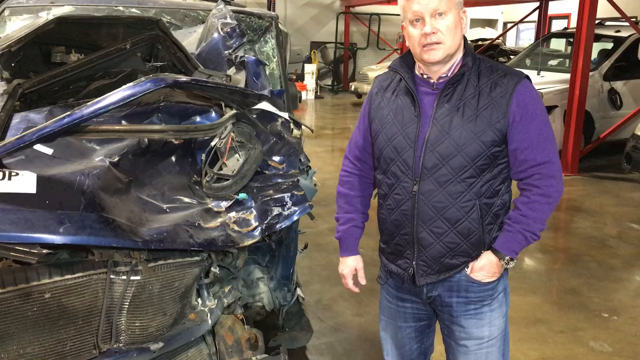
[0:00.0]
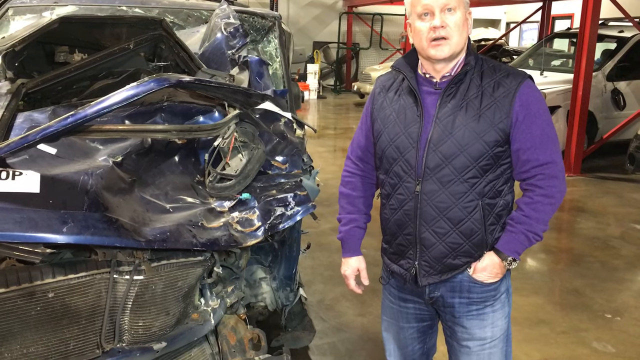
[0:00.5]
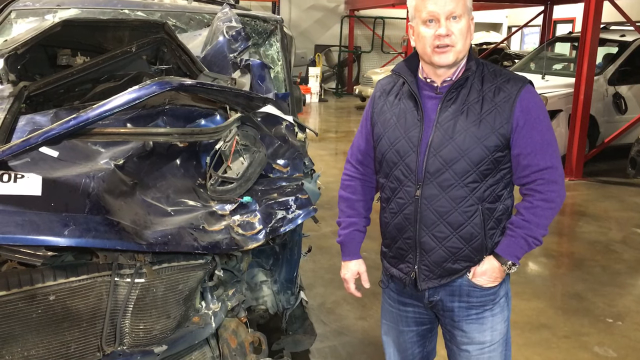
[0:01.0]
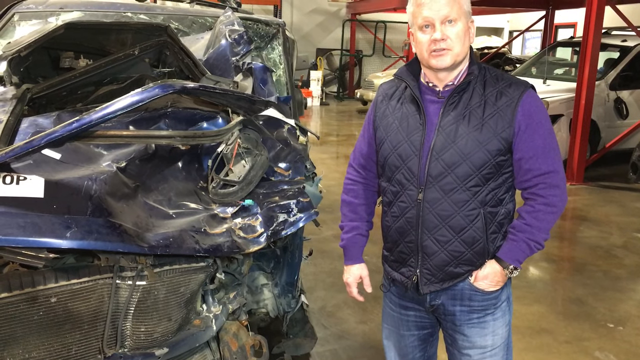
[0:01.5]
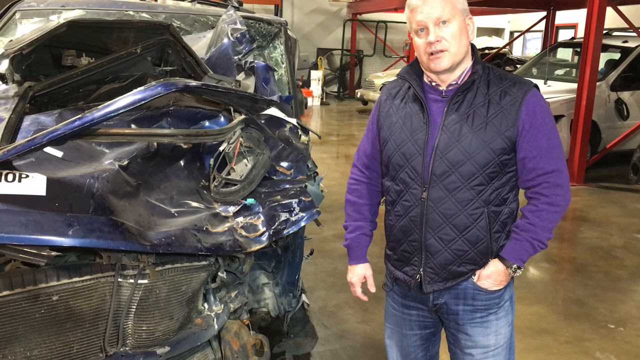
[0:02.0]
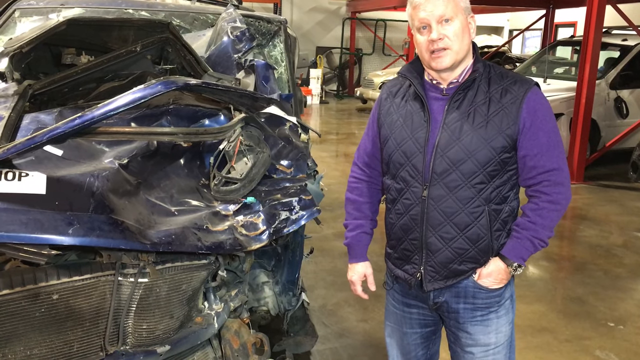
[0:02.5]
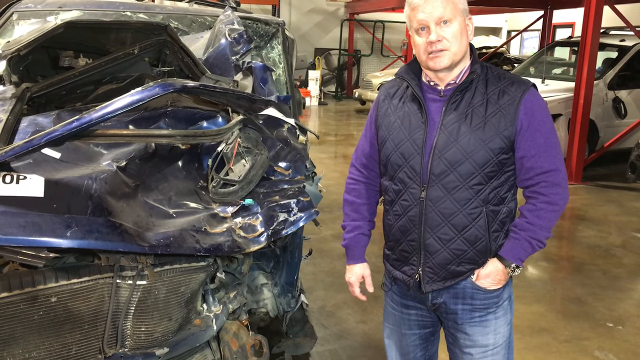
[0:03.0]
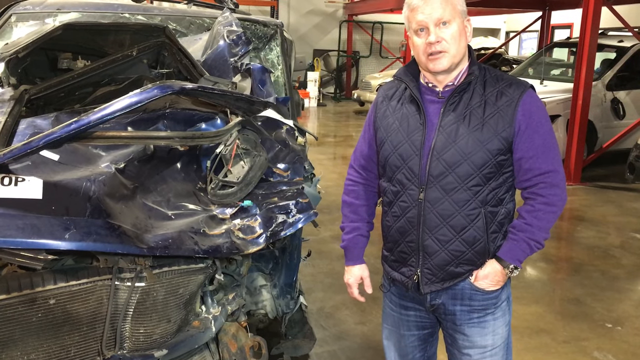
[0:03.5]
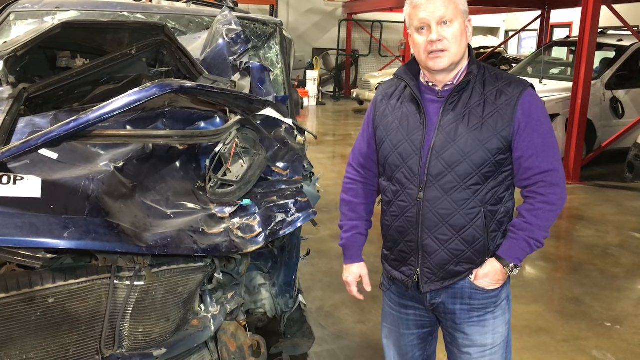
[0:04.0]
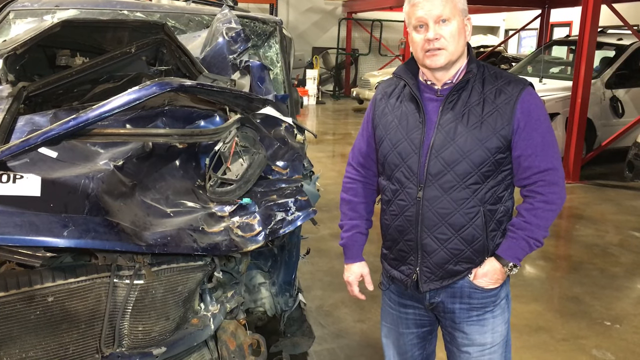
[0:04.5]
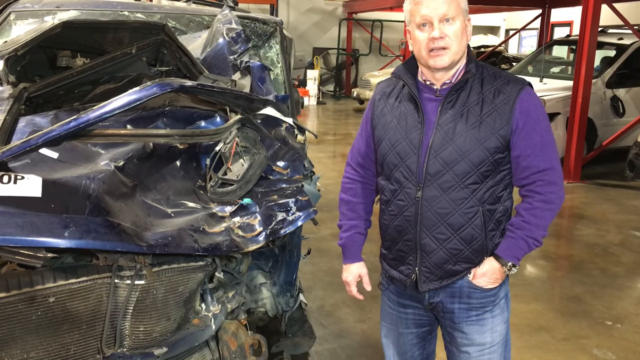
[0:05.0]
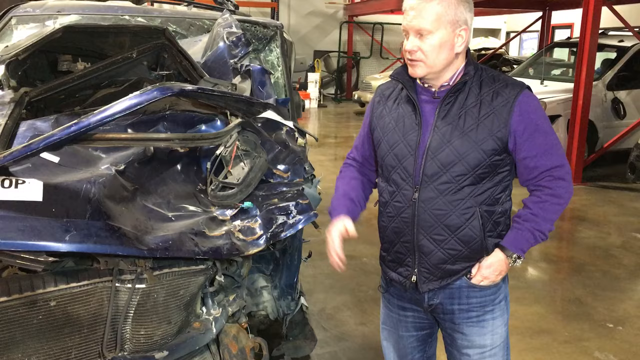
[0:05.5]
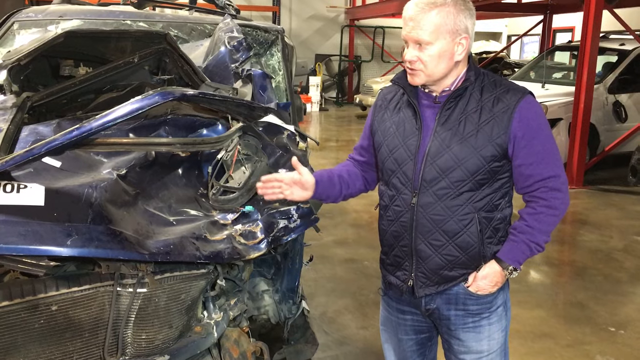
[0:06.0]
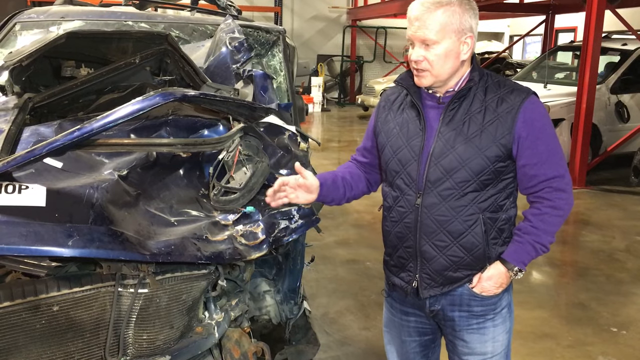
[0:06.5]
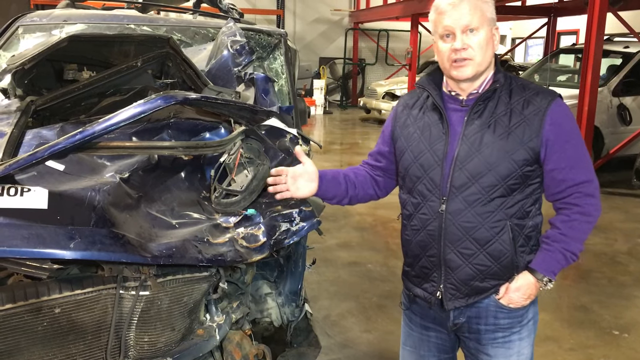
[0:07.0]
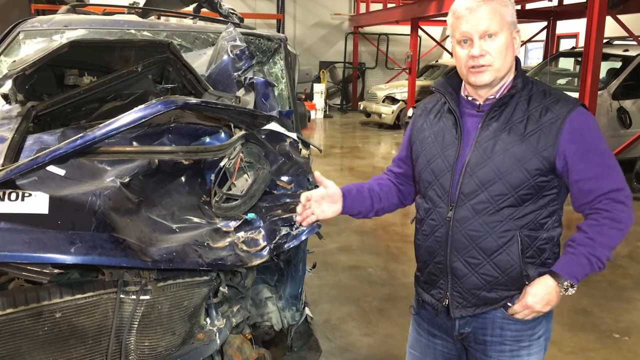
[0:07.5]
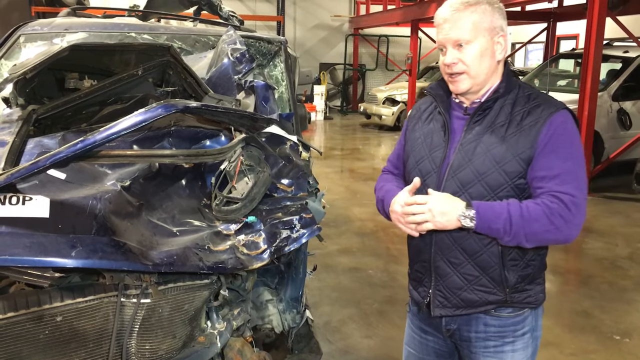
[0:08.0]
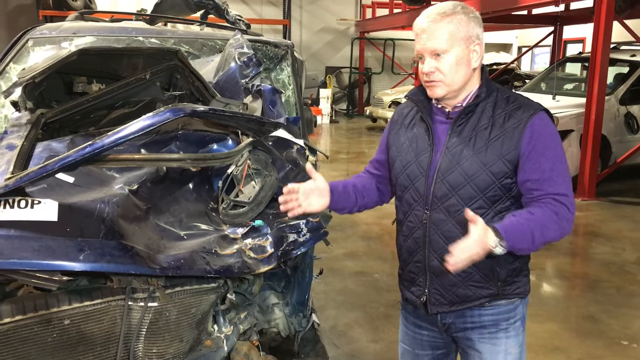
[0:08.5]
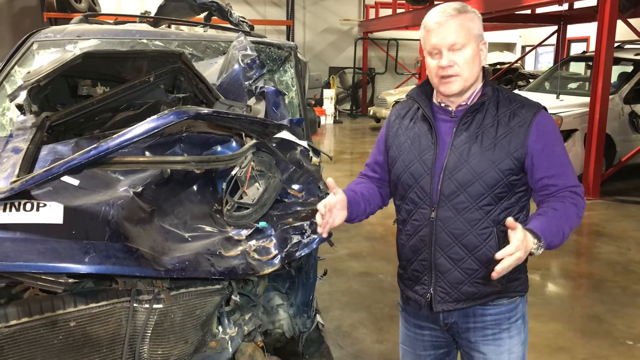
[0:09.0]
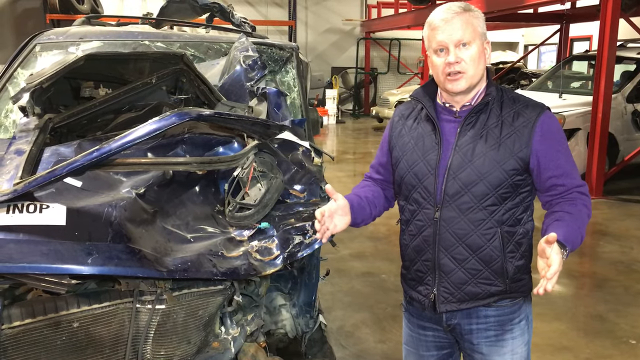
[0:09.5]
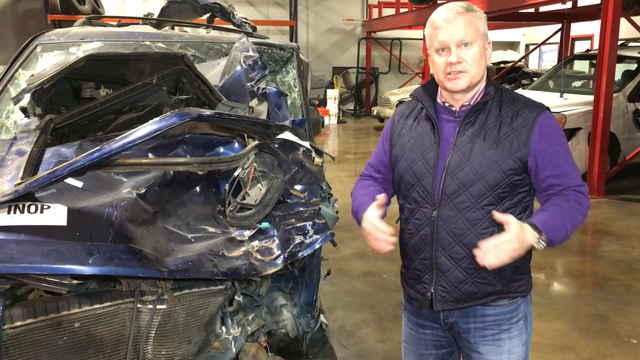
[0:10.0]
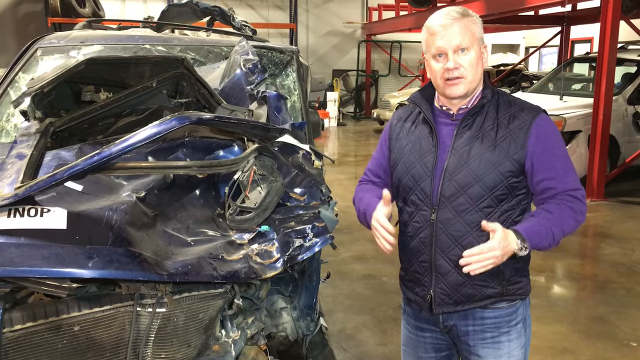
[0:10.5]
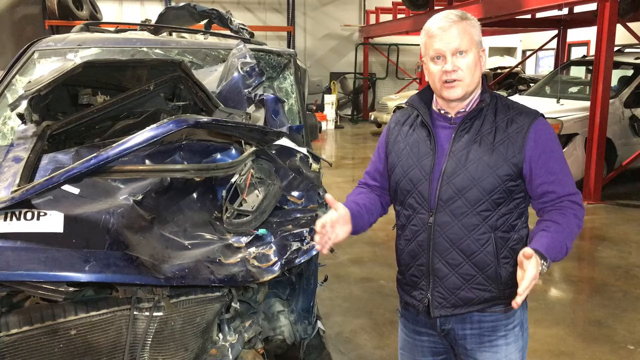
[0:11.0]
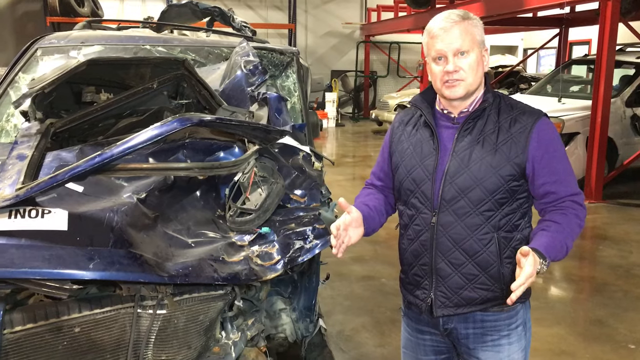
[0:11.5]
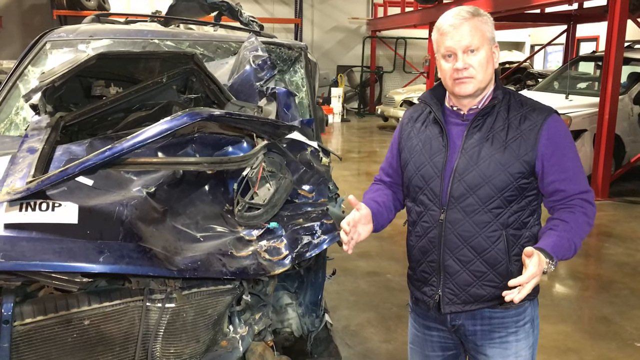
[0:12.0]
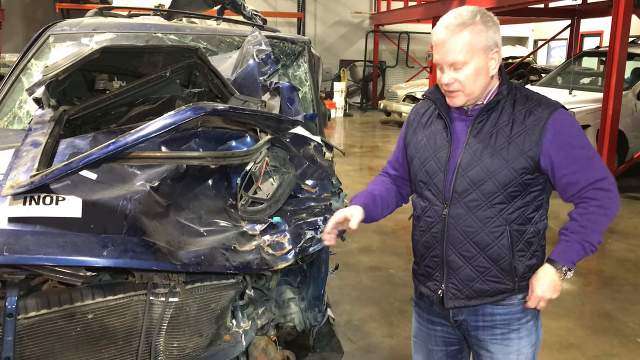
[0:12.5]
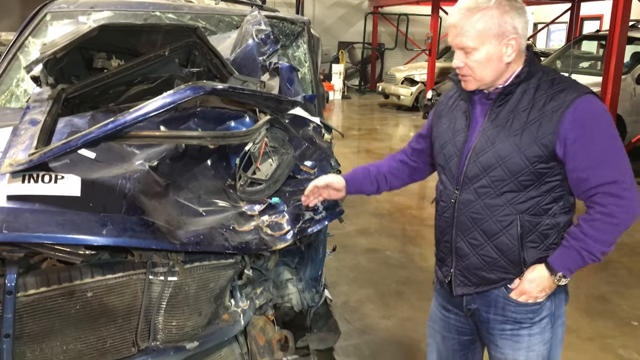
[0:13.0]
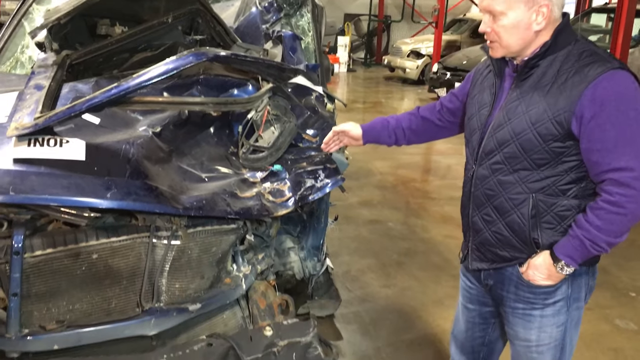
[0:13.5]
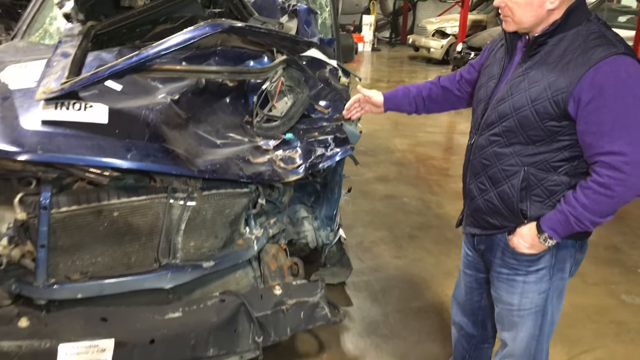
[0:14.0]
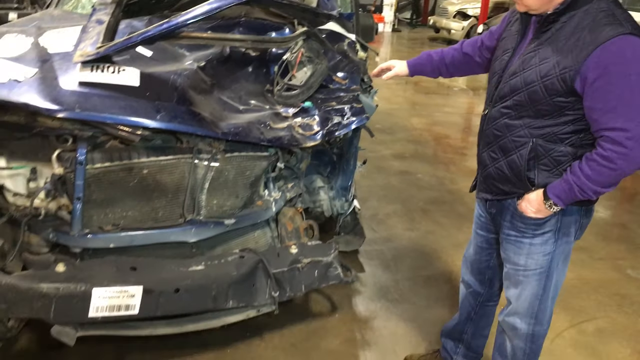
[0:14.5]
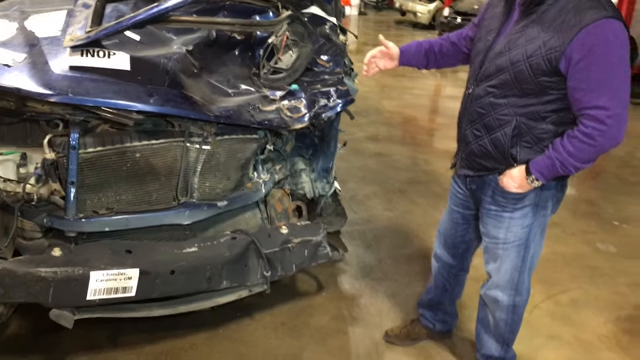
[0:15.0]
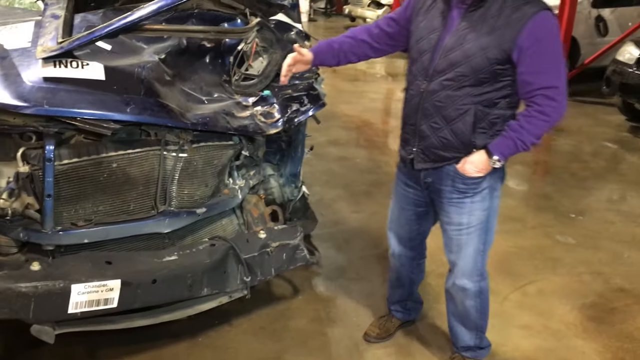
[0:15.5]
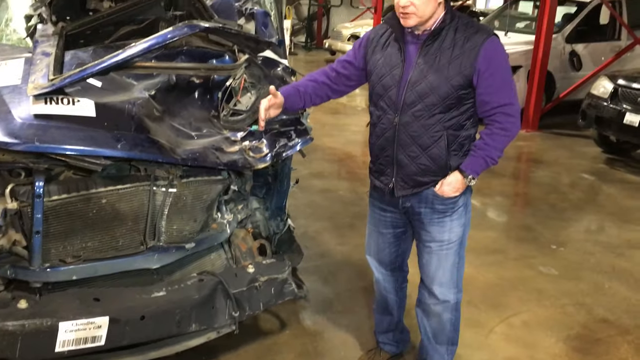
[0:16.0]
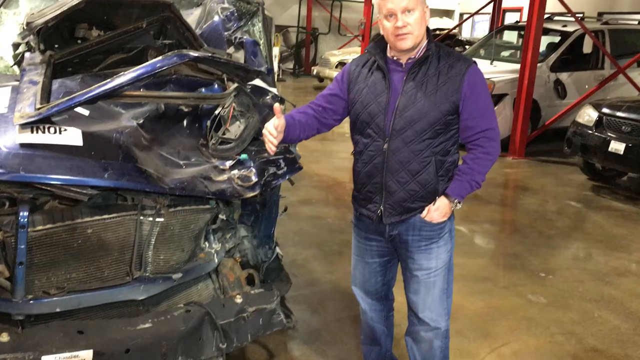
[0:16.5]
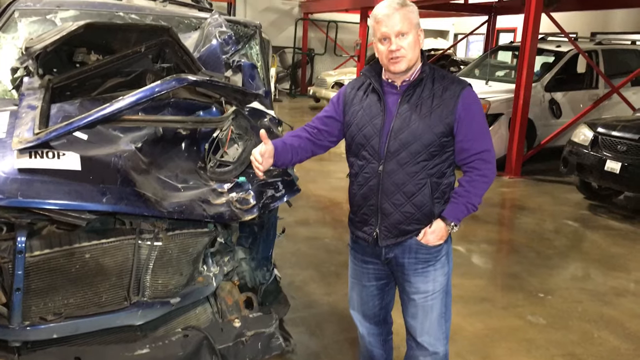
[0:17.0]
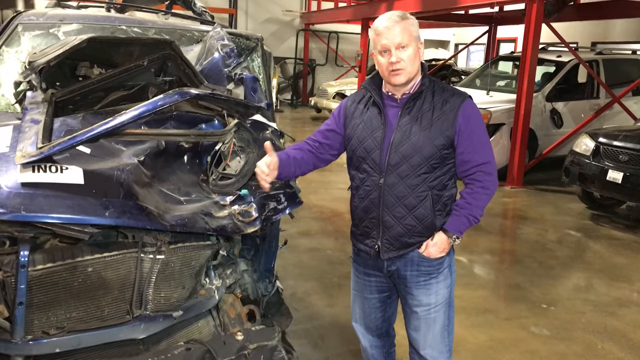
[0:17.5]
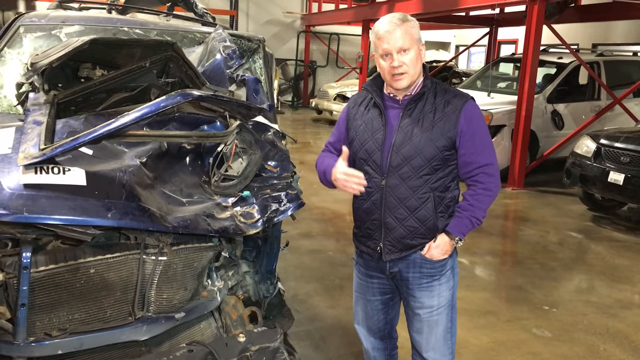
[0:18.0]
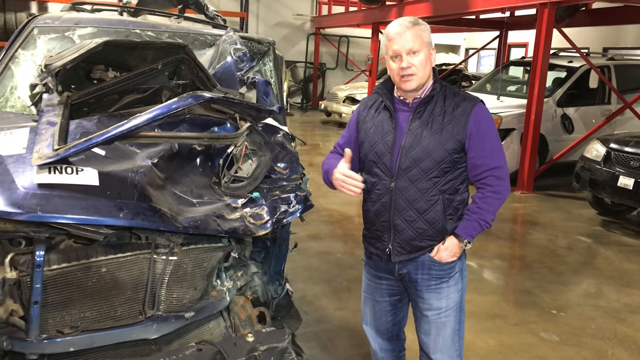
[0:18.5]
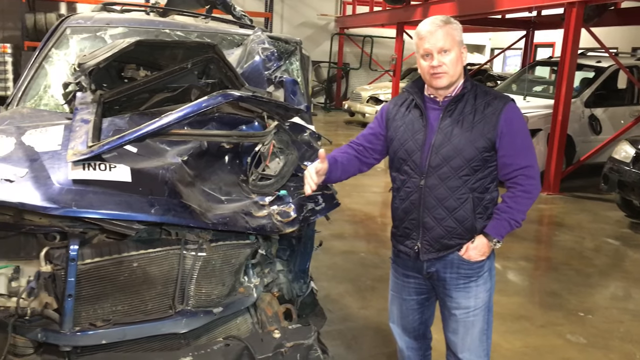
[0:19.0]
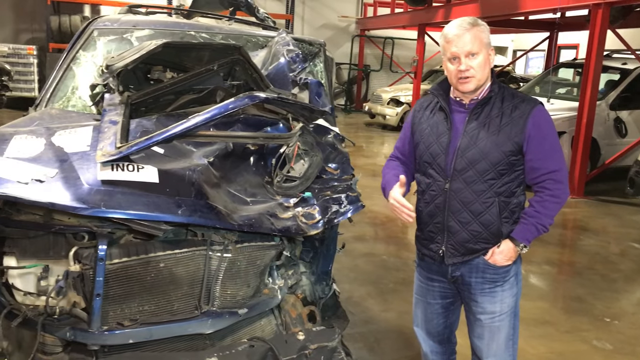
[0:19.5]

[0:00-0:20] The inside of a garage is shown; it looks like a repair facility of some type. A man stands to the right of a wrecked vehicle. He appears to be in his mid-50s and is stocky, wearing a long-sleeved purple shirt, a black sleeveless padded vest and a pair of jeans. With his left hand in his front jeans pocket, he looks at the camera and gestures toward the severely damaged blue vehicle. He looks as if he might be the owner of the facility. Other vehicles are parked behind him over his left shoulder: a white SUV and another vehicle parked in little open stalls, under a scaffolding-type steel beam structure. These are perhaps vehicles the garage has not yet worked on.